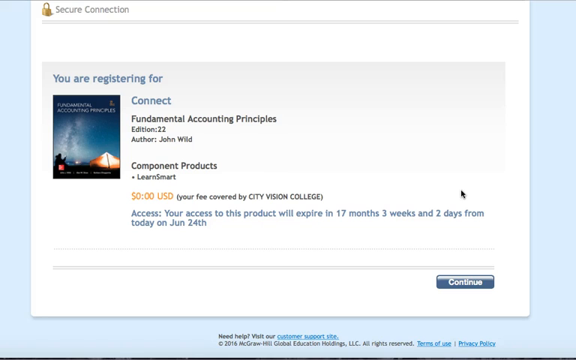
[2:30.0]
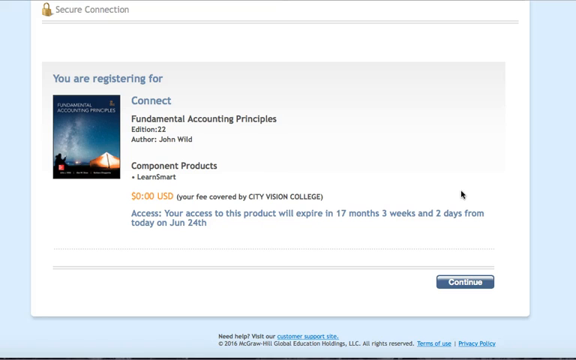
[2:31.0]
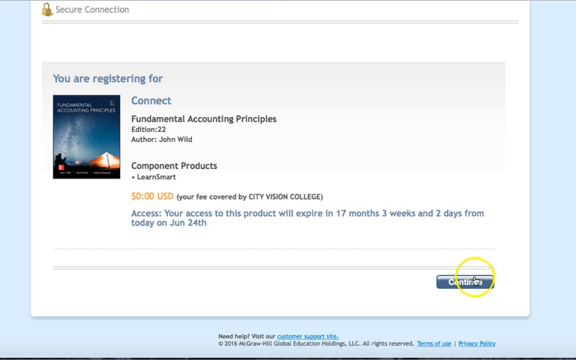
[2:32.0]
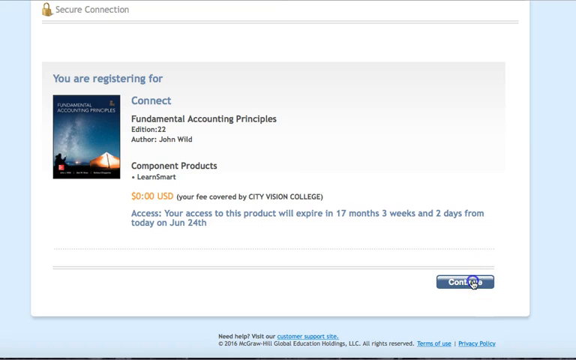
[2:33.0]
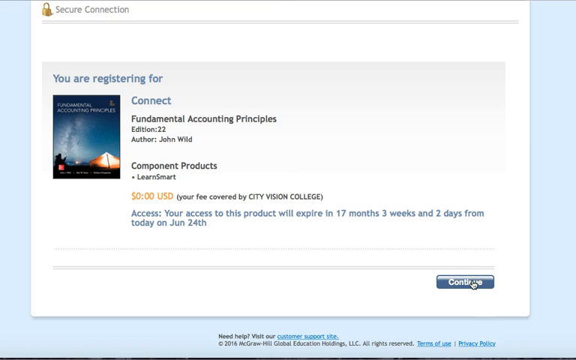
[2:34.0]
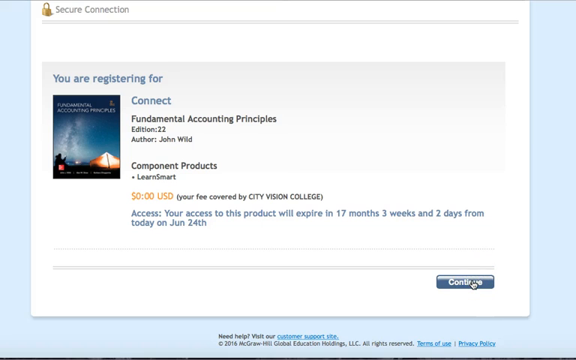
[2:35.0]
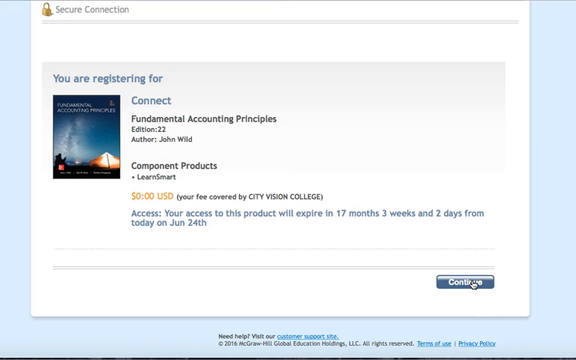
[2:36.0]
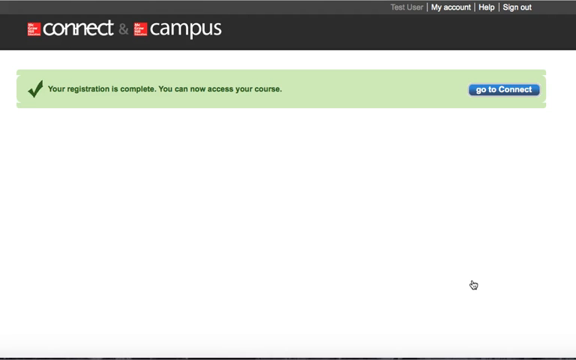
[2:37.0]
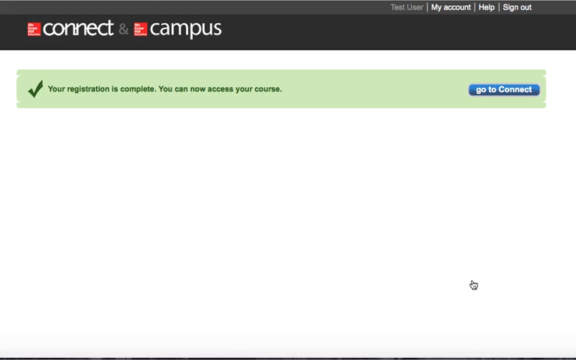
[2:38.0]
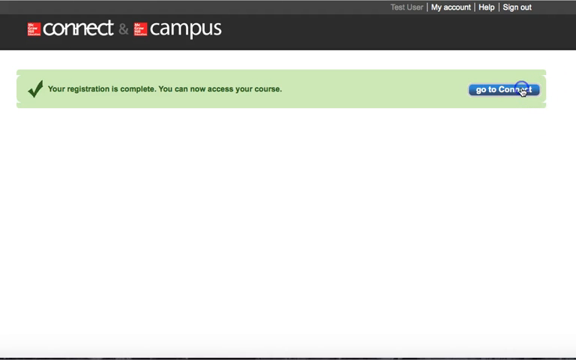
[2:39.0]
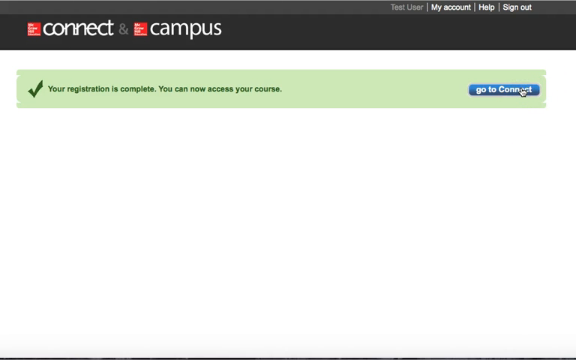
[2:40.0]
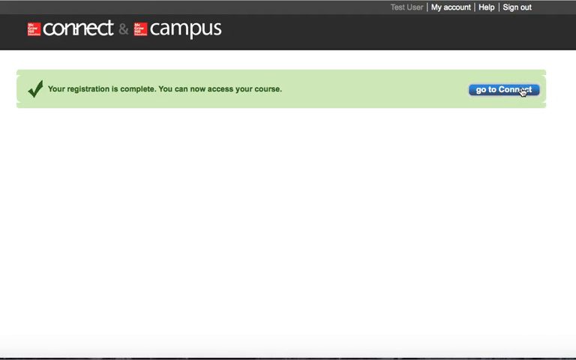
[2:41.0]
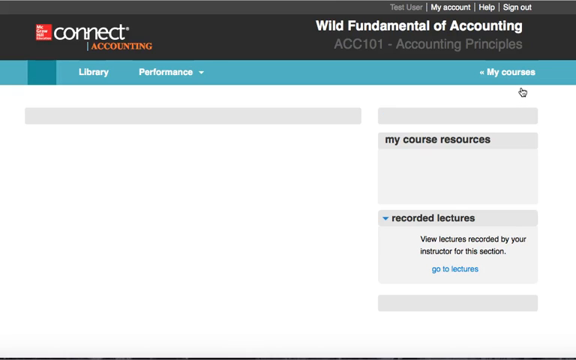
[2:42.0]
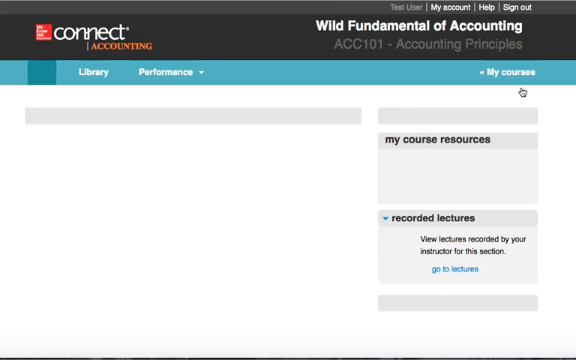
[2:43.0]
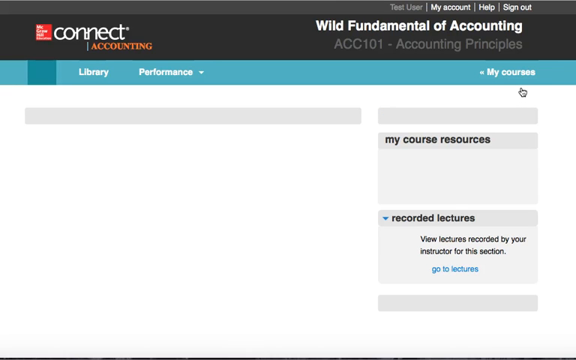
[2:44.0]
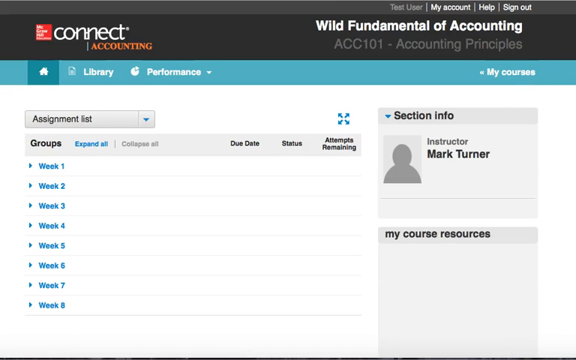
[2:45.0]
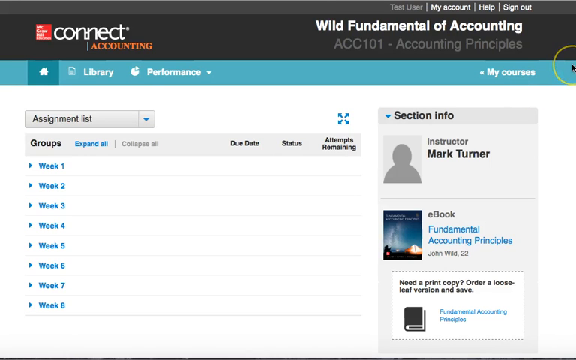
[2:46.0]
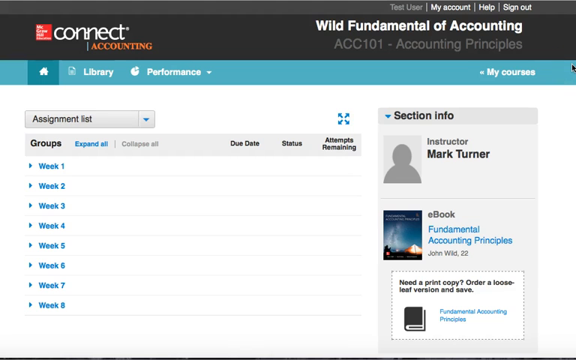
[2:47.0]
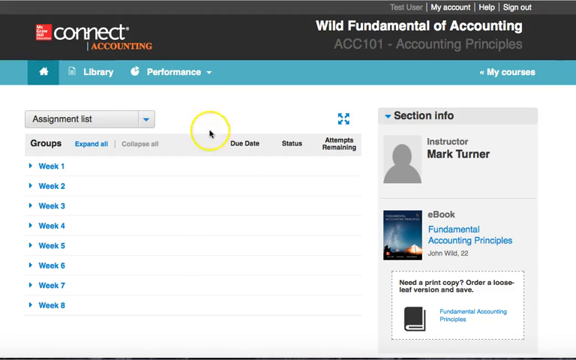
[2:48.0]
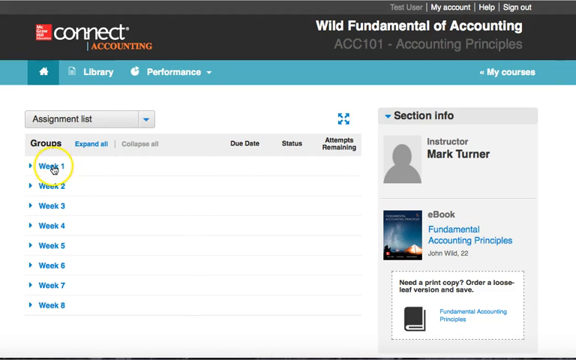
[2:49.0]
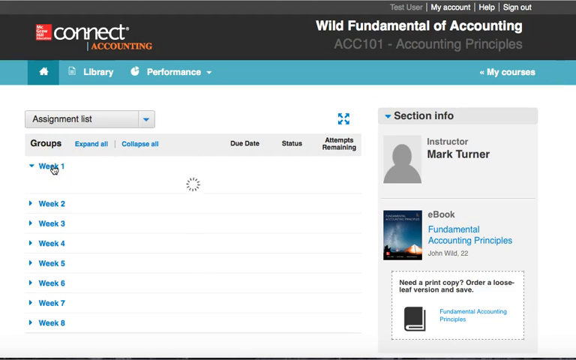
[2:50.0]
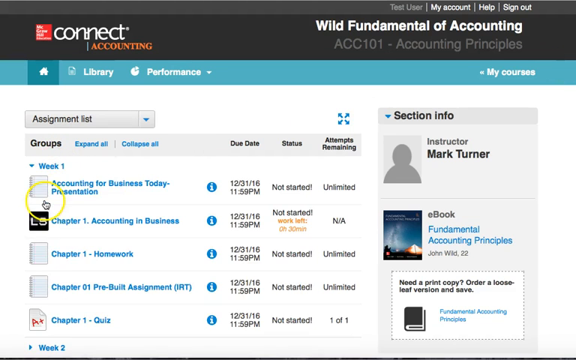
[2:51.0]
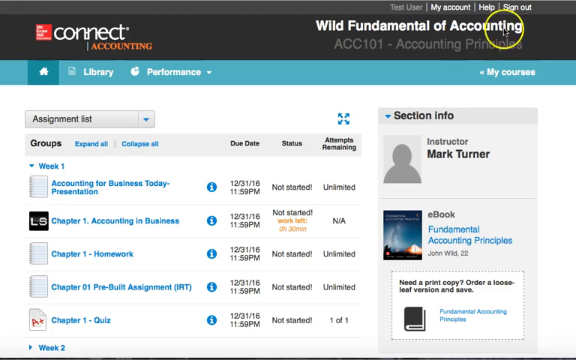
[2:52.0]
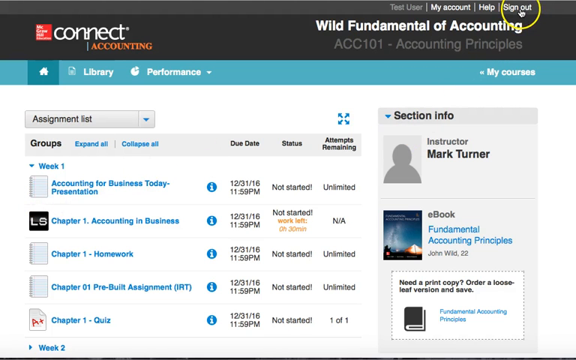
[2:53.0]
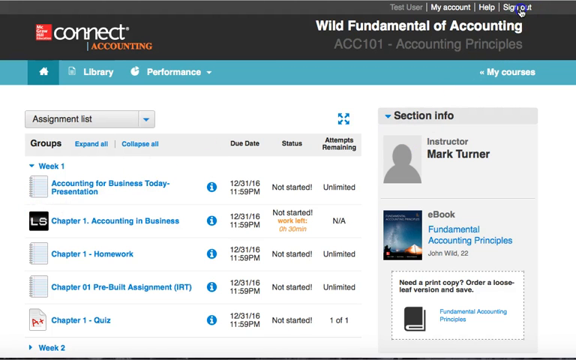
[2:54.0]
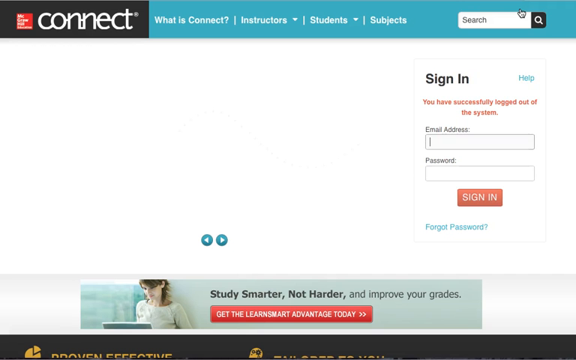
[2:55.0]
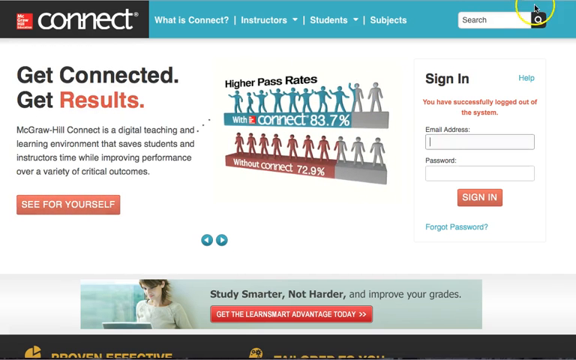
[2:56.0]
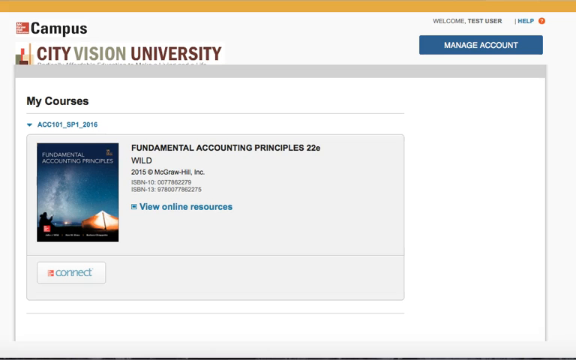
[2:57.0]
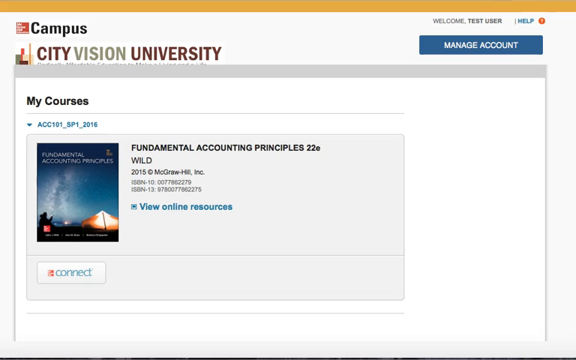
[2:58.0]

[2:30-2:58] The "you're registering" page is still shown. After quickly going over everything, the person clicks the continue button. The page loads and says "your registration is complete", with a button that says "go to connect". He clicks it, and McGraw-Hill Connect accounting opens, showing accounting 101 accounting principles and the online version of the class. The instructor is listed as Mark Turner, and there is the e-book, fundamental accounting principles. A list of weeks 1 through 8 follows, each with a drop-down menu, apparently for assignments. He clicks on week 1, revealing three assignments to be turned in with unlimited attempts; one looks like it asks to read the first chapter, and there is a quiz. Each section has a due date of December 31st 2016. He then clicks sign out and returns to the City Vision University website.